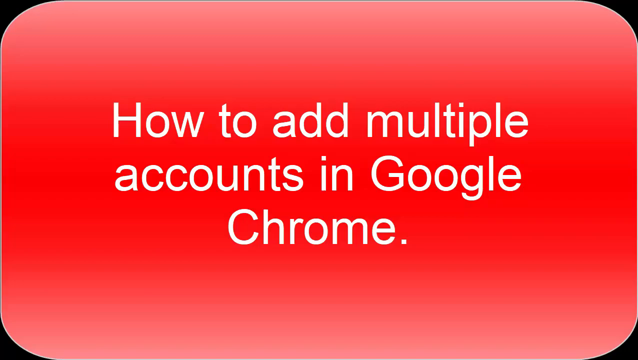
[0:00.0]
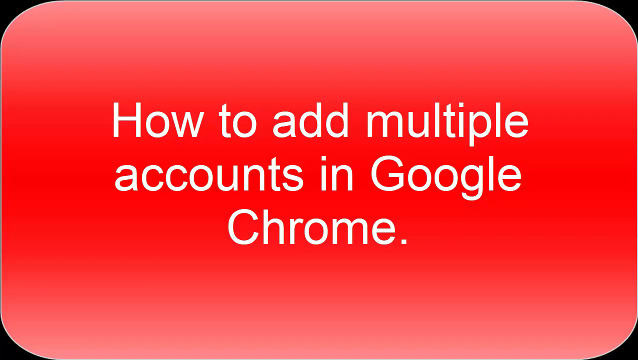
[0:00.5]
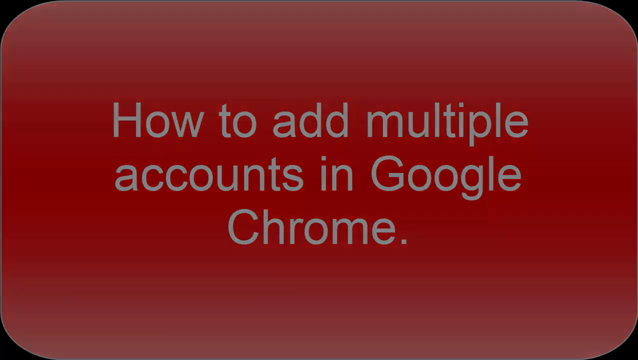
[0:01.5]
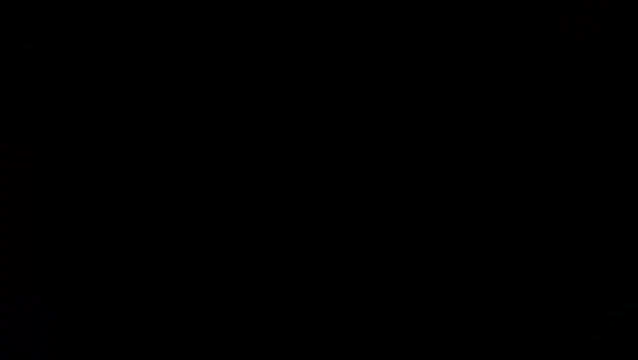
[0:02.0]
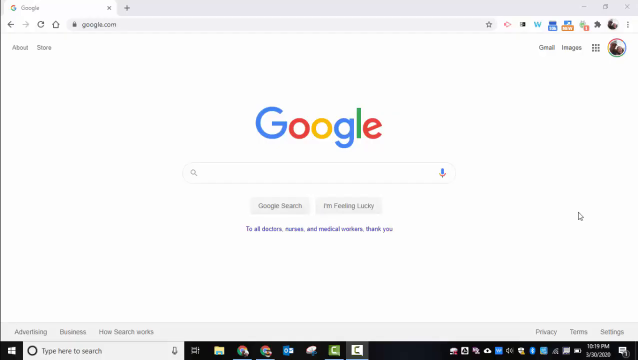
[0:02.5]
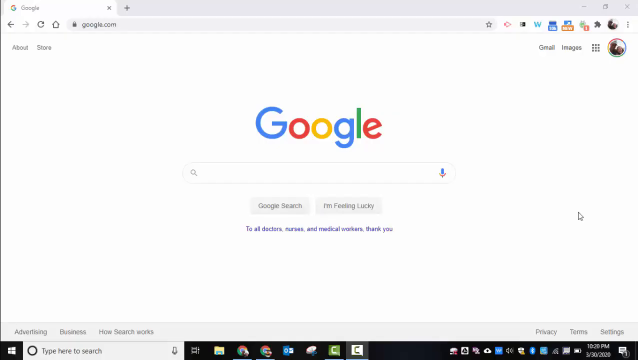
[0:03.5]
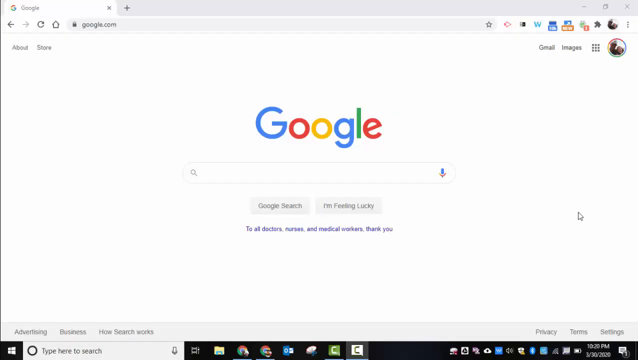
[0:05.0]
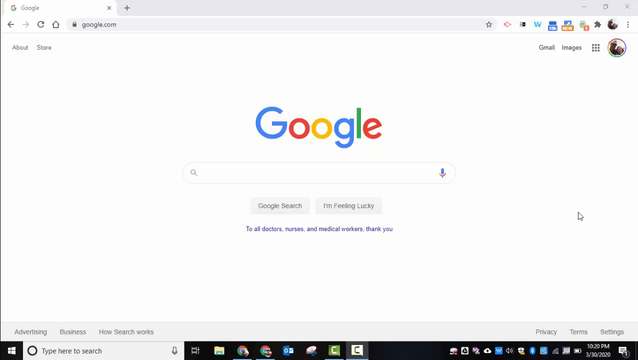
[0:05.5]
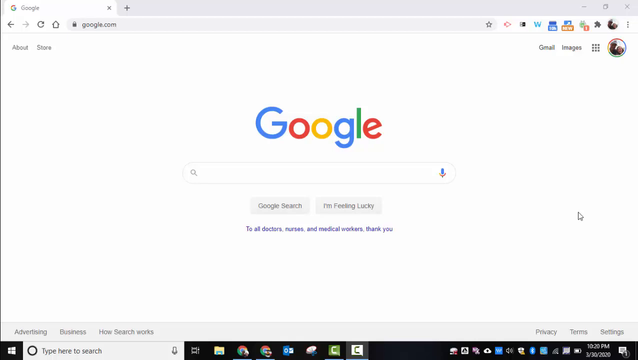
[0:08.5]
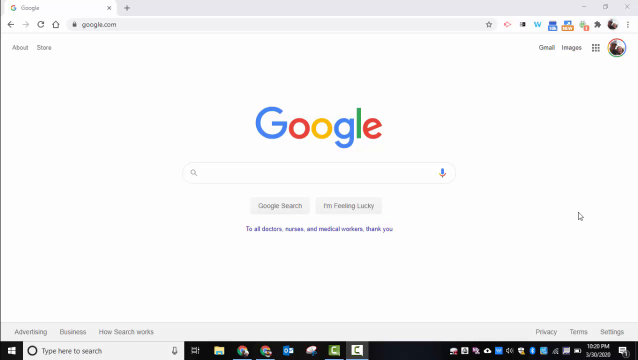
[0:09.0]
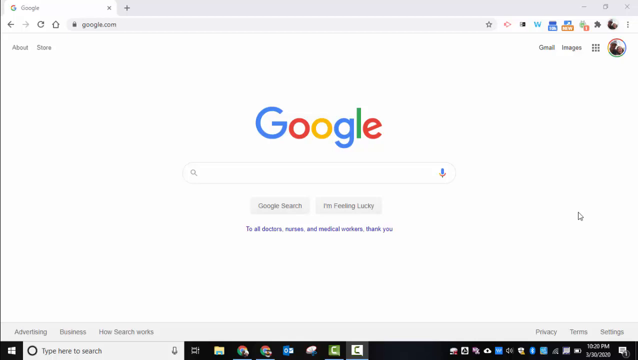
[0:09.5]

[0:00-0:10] A post reads "how to add multiple accounts in Google Chrome", written in white text on a completely red background. A Google Chrome page is also open, with nothing typed on it. The scene changes slightly, from the main Google Chrome page to the red post with the white text.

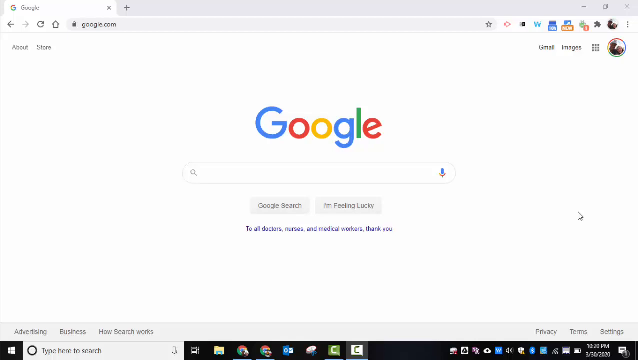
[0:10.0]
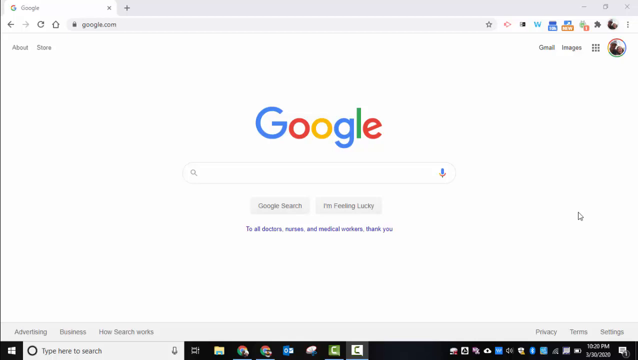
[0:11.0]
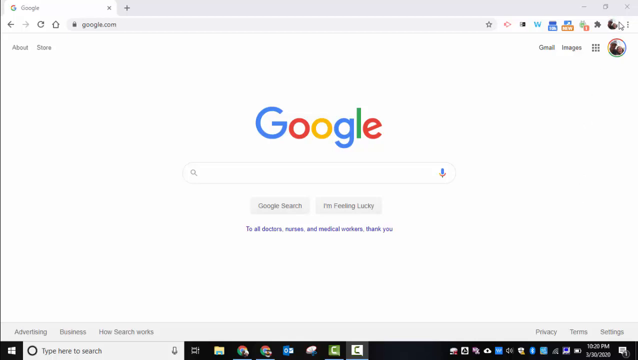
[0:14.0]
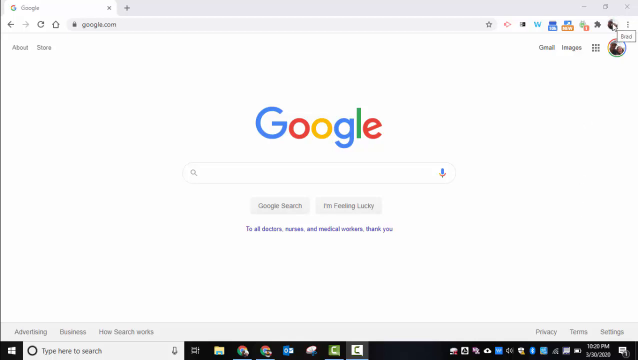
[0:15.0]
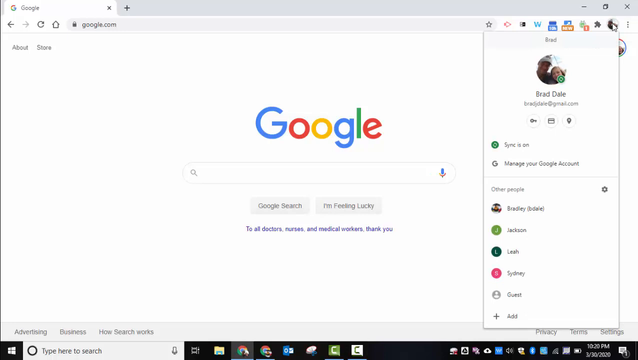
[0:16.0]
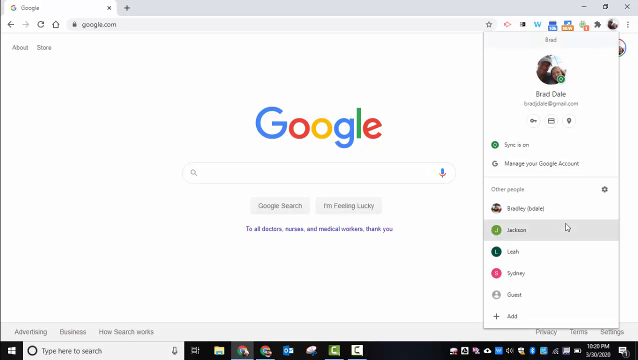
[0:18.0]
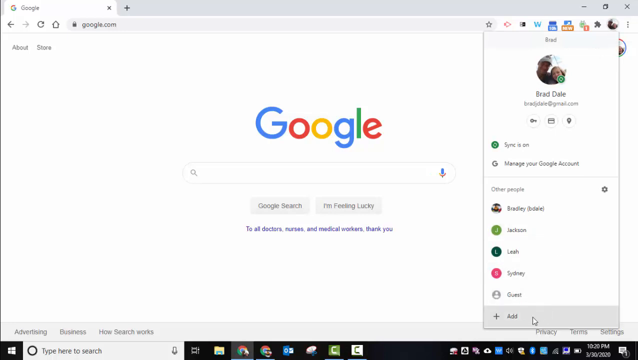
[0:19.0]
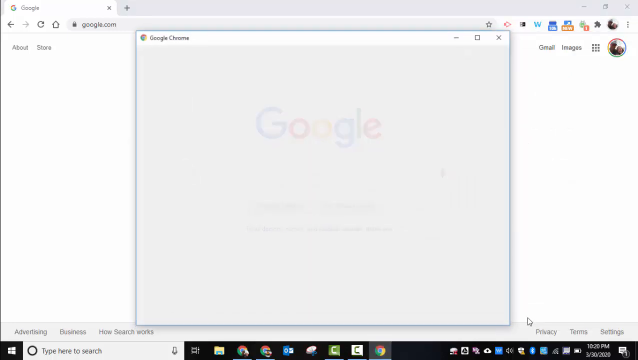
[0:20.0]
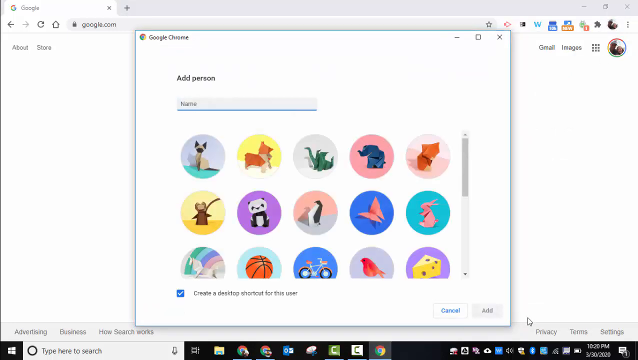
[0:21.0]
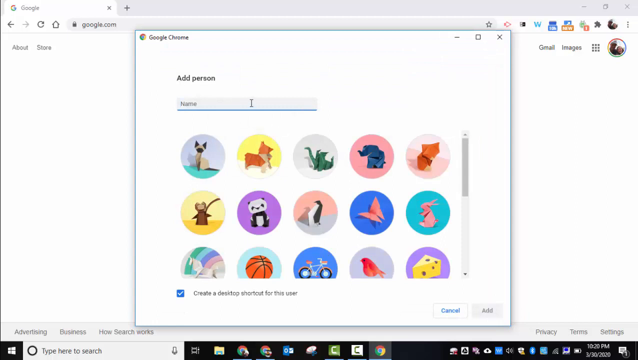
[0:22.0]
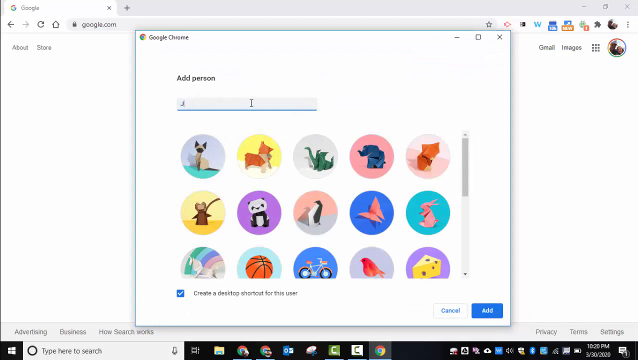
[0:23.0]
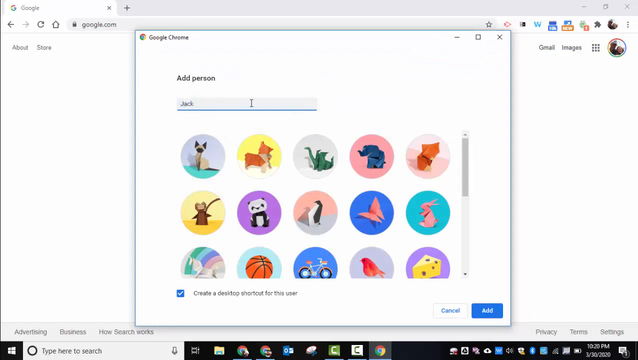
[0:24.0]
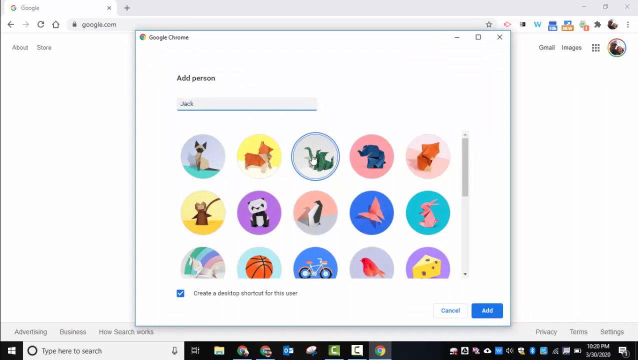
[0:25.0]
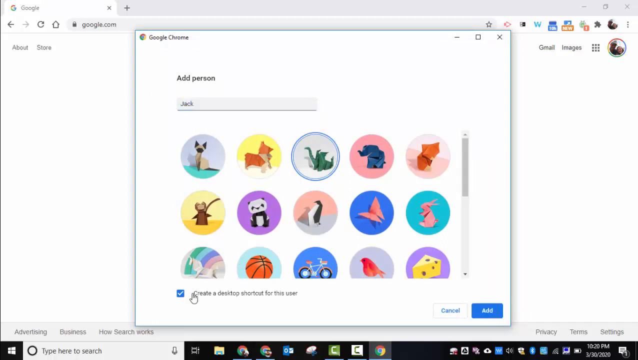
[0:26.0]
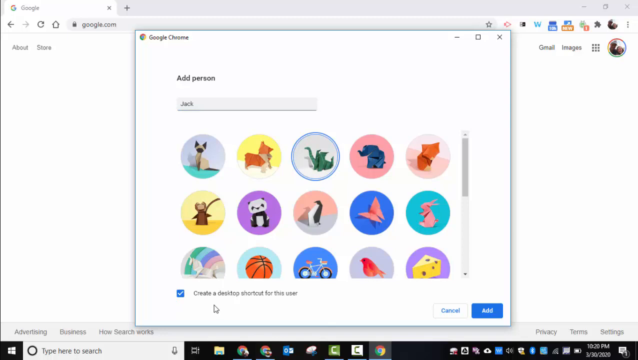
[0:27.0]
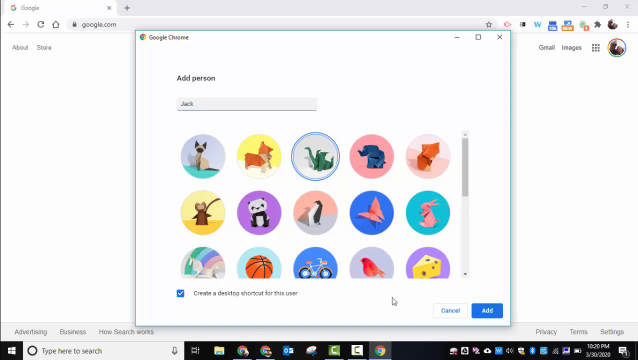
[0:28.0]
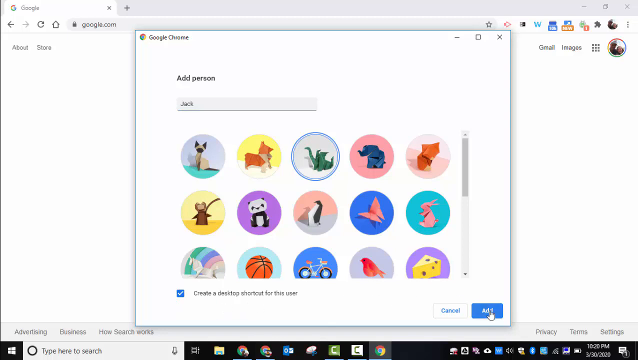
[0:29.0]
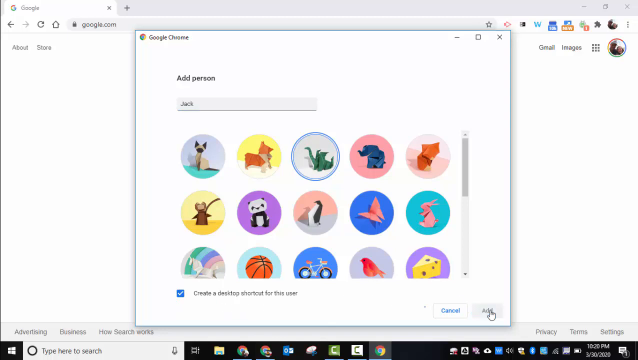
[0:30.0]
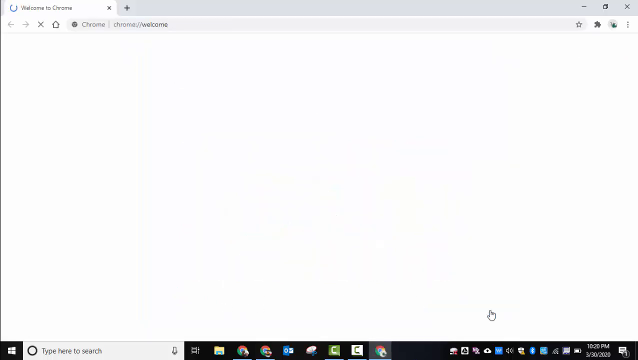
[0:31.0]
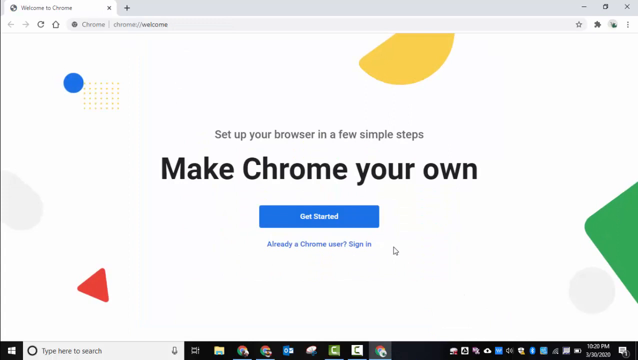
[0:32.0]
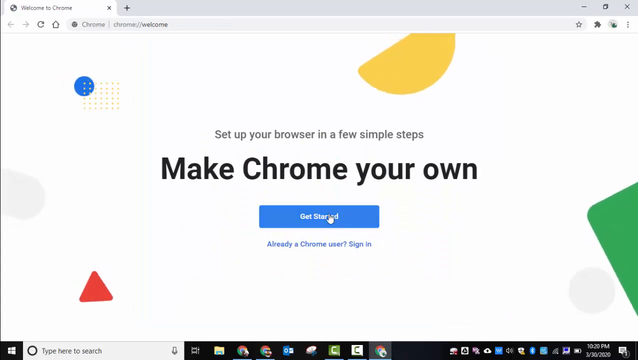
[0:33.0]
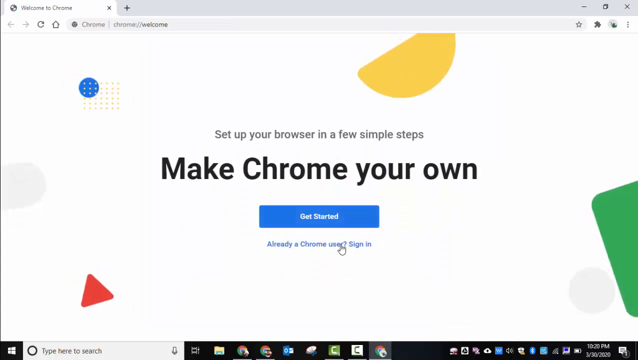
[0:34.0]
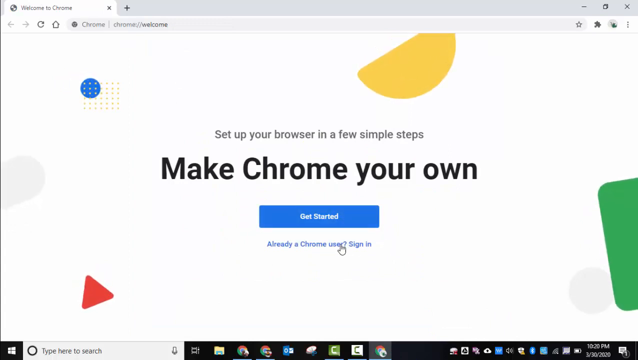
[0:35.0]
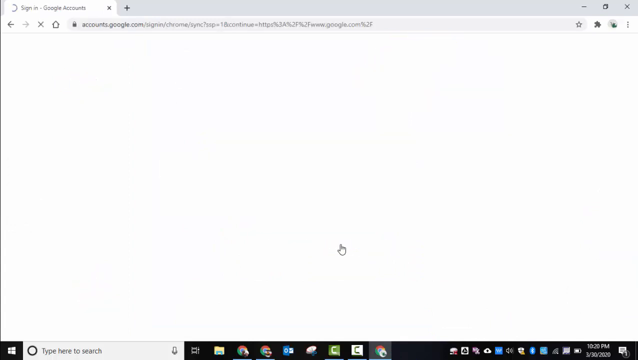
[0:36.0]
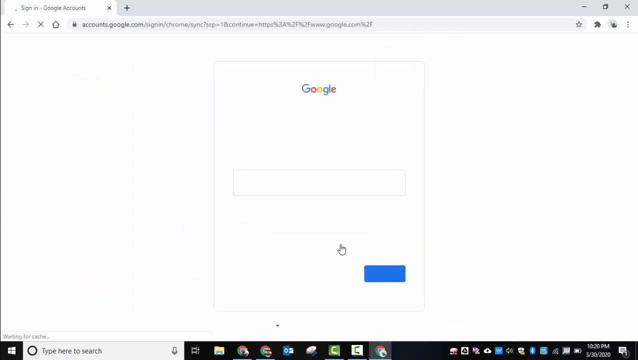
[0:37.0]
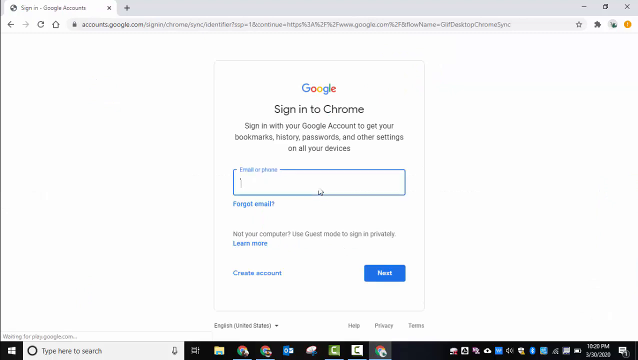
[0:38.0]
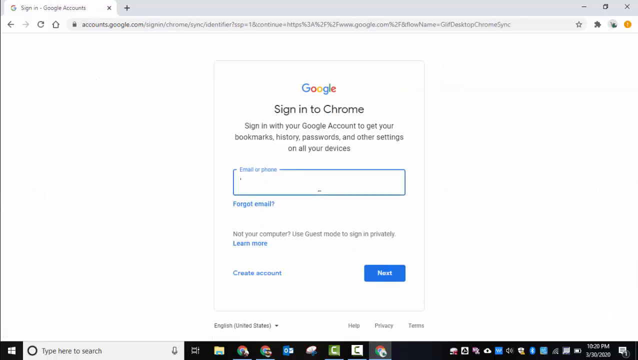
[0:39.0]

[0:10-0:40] A Google page is shown, and the video demonstrates how to add multiple accounts in Google Chrome. The mouse goes up to the main account and clicks the profile, then moves down the drop-down to where it says "add" and clicks it. A few avatars appear to choose from, then an email address or details are entered and the account is signed in, apparently completing the creation of another account in Google Chrome.